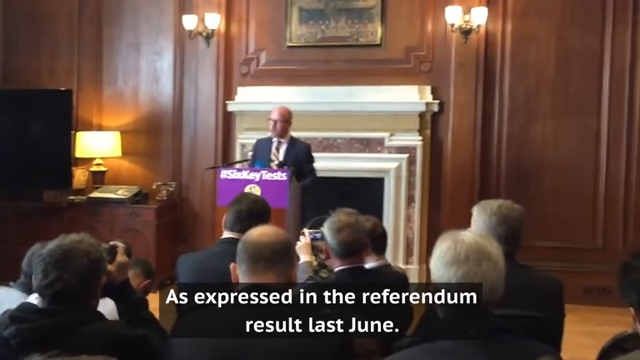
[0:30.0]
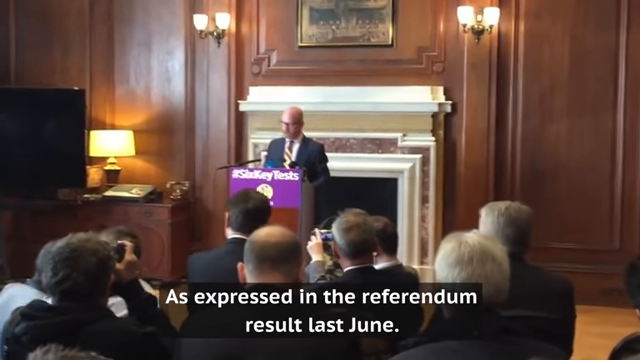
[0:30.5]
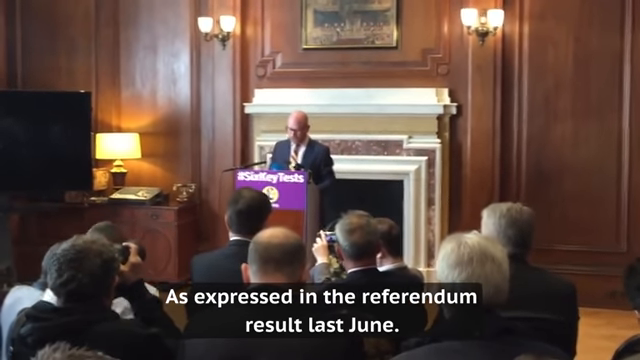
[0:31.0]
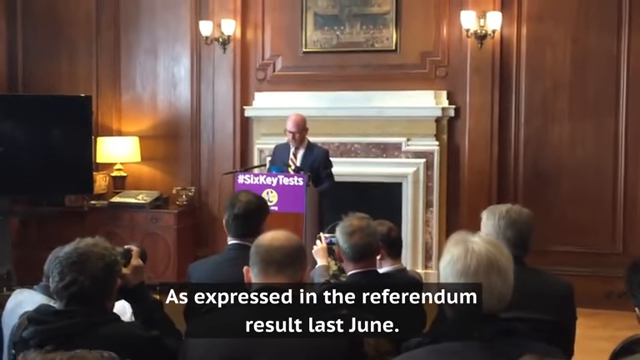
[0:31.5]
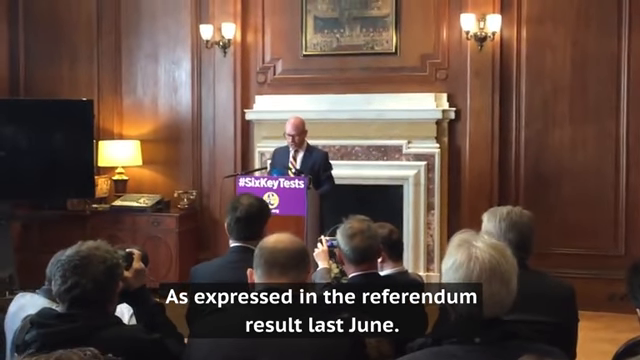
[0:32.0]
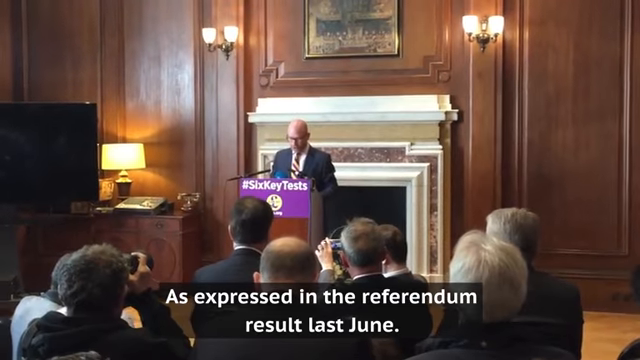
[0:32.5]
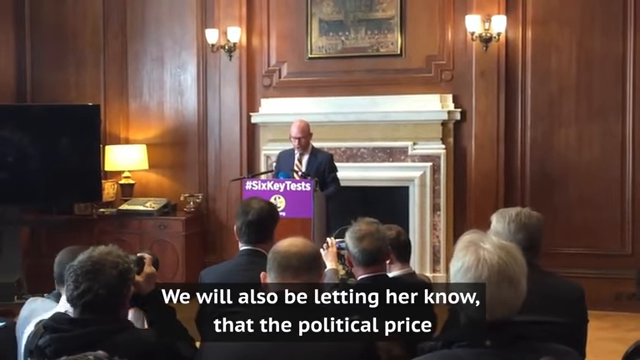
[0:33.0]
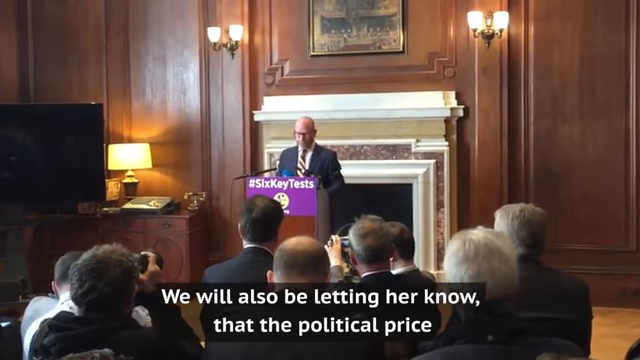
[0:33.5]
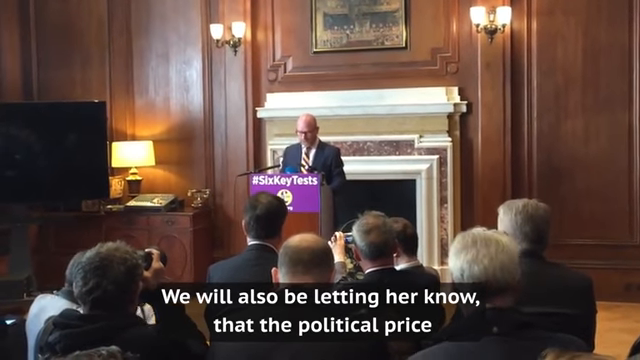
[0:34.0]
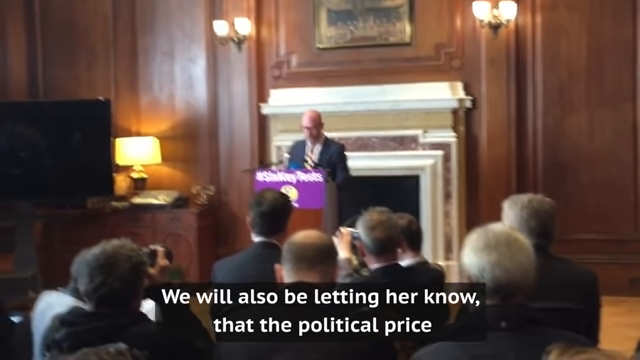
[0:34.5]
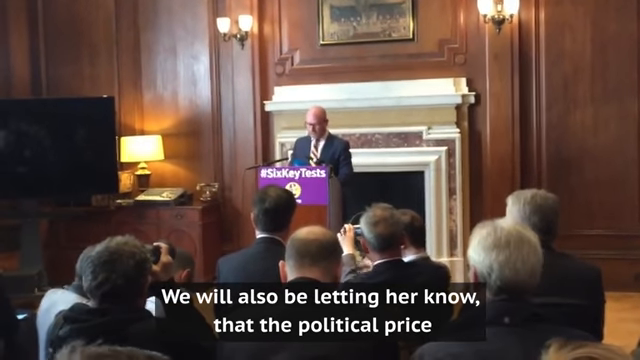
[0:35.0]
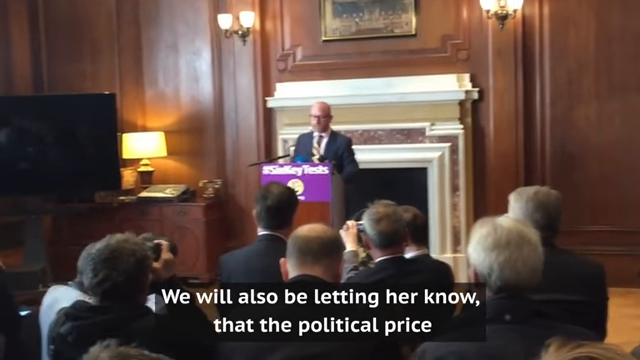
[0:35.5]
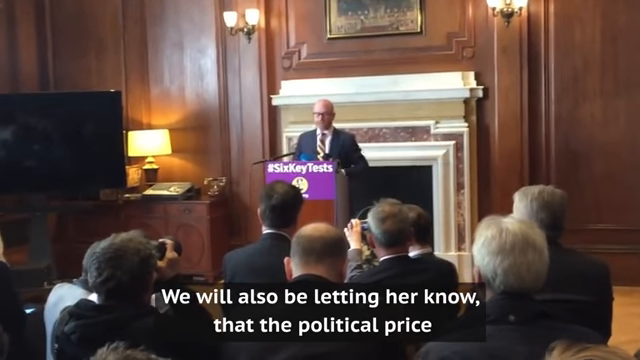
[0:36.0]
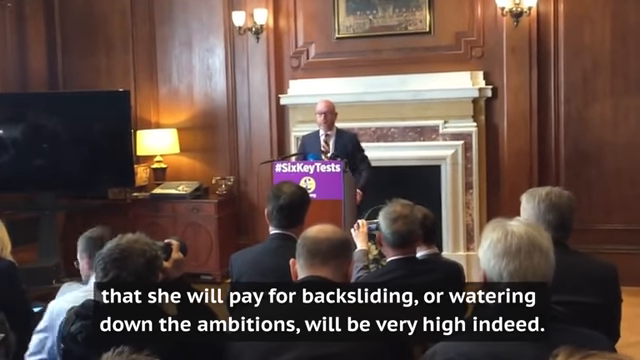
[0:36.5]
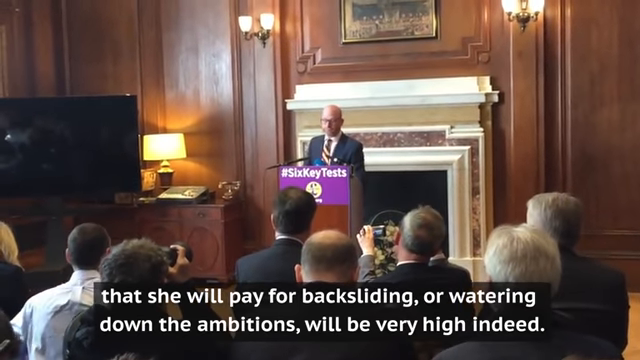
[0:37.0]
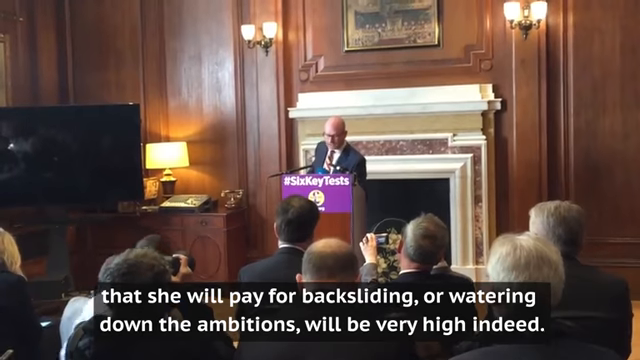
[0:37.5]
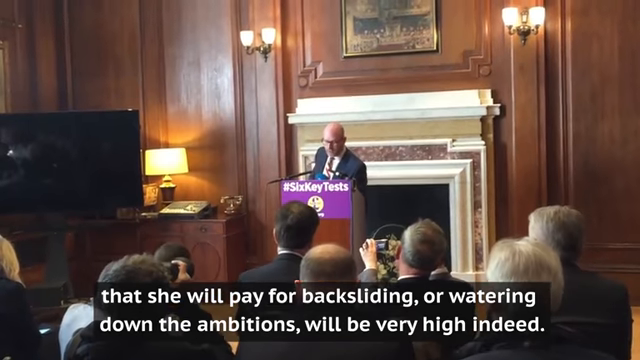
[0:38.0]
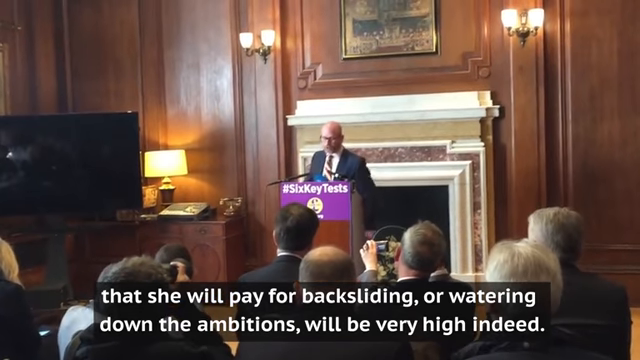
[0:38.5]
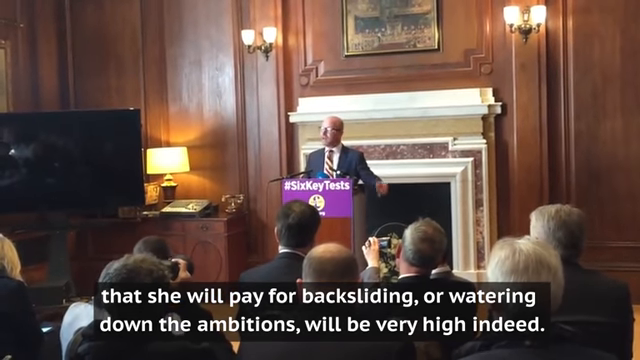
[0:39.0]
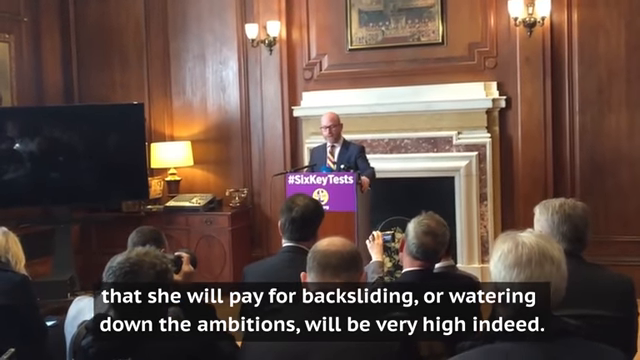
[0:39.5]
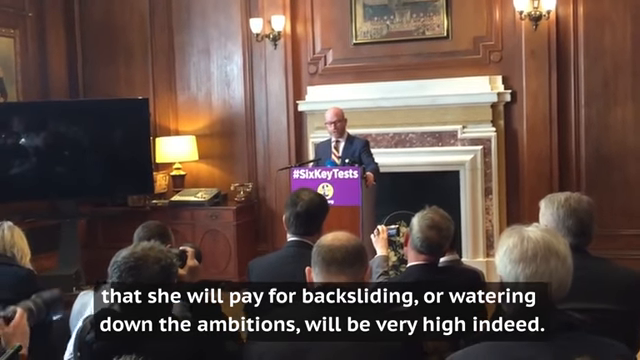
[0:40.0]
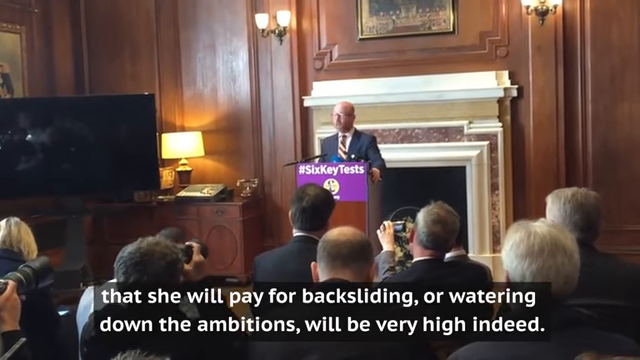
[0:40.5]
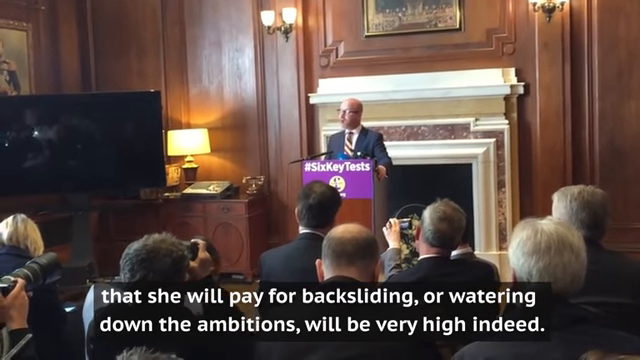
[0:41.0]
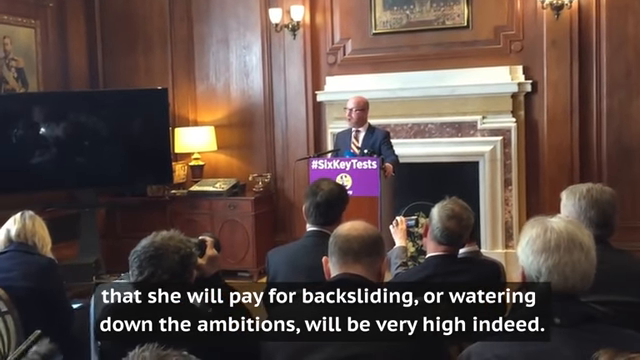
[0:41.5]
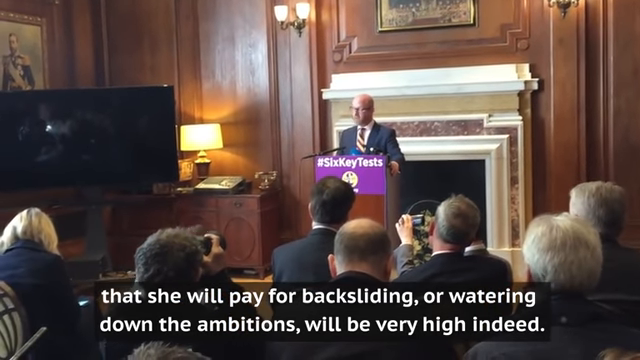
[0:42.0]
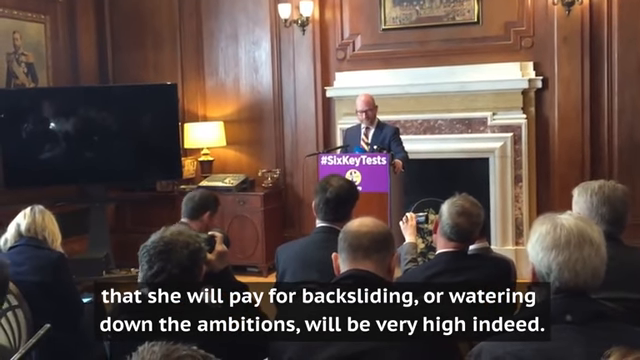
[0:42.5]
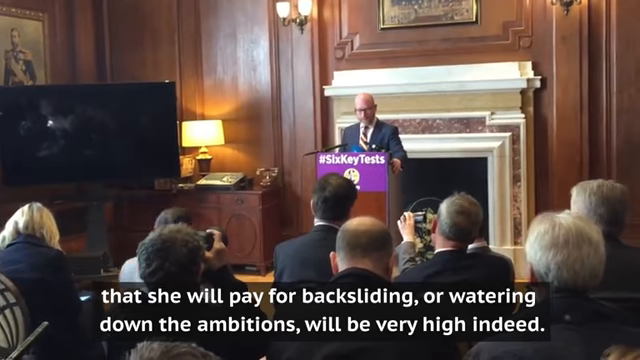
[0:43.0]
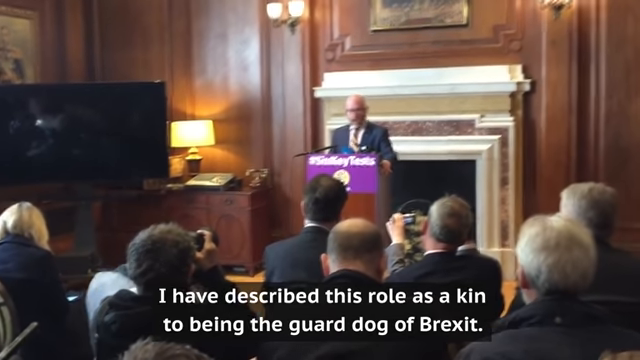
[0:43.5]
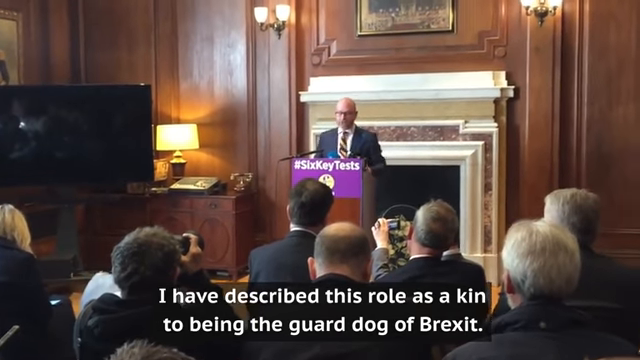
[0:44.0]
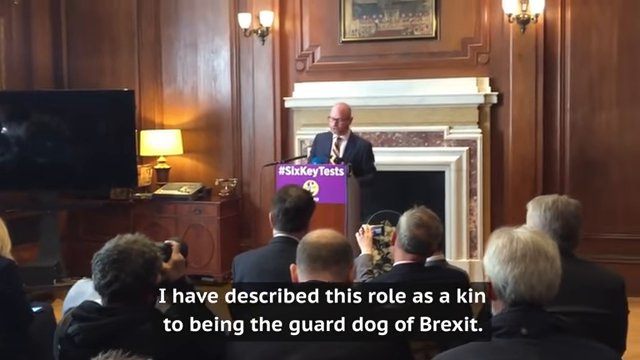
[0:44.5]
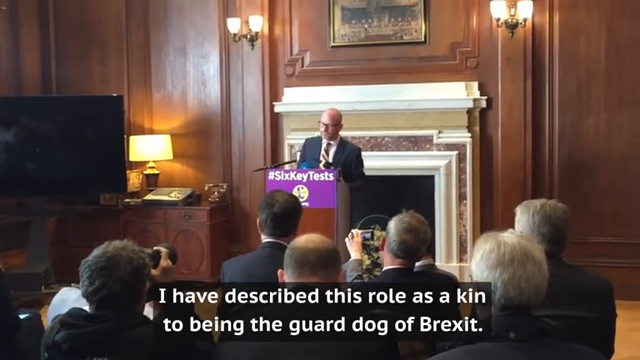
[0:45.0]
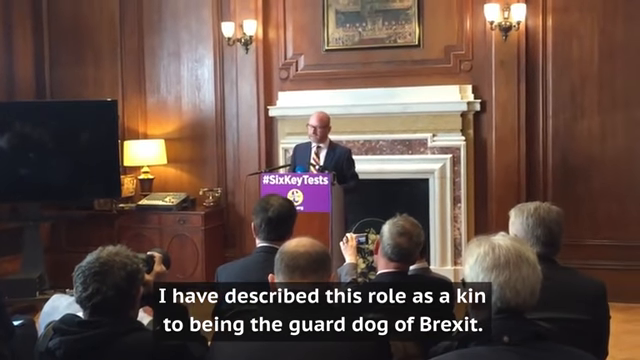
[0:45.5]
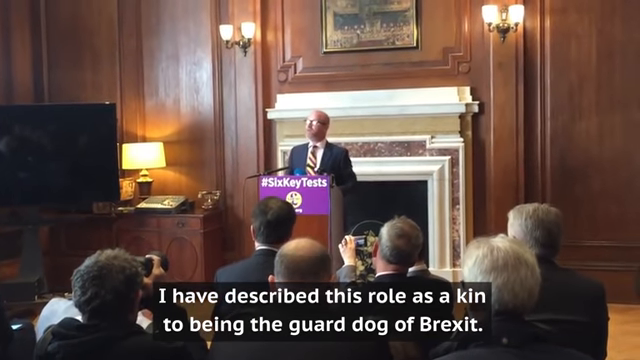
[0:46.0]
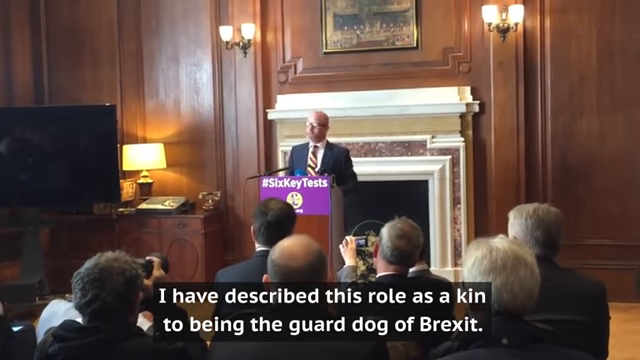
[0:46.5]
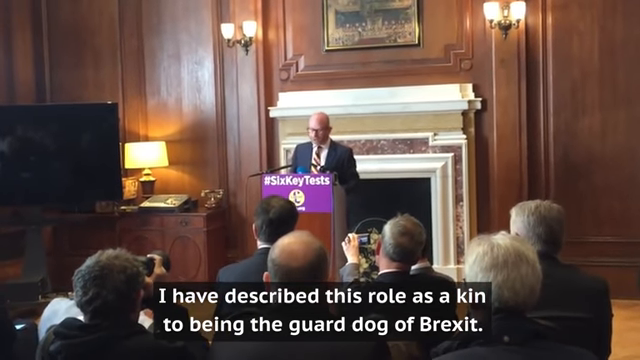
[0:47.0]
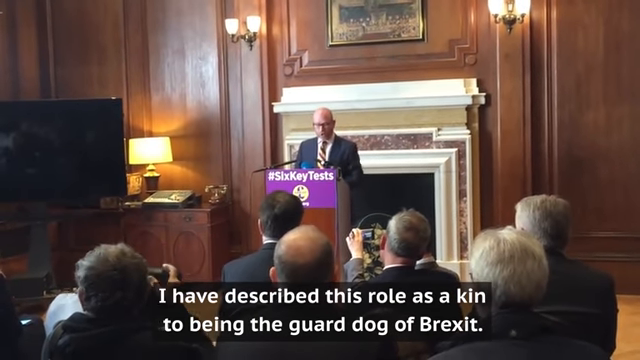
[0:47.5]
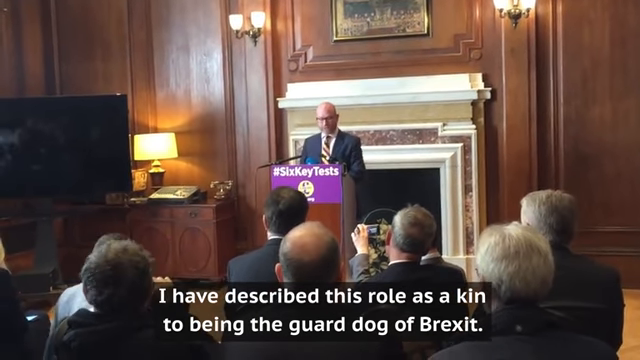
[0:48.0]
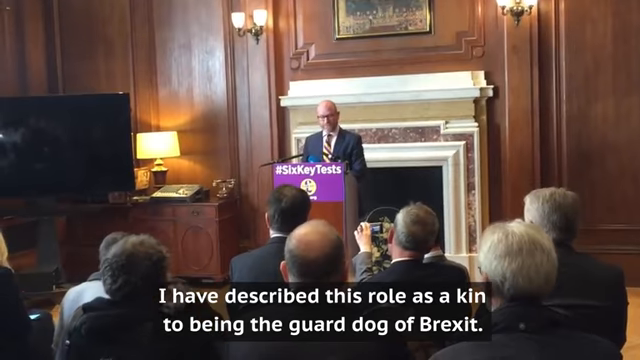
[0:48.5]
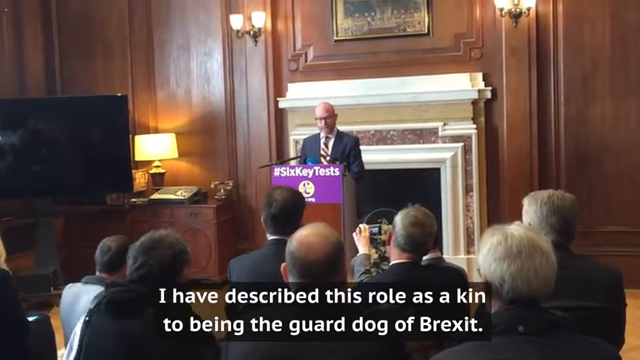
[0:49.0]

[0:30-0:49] A tall man wearing a black shirt stands at a podium, facing the audience and the camera, giving a speech. Behind the podium, a milk-white fireplace is on a wooden-paneled wall, with a framed painting hanging above it and two lamps attached on both sides. The audience, possibly members of the press, sit in front of the podium with their backs to the camera, holding mobile phones and cameras to record the speech. The top of the podium reads "#sixkeytests" in white on a violet background. There is a night lamp, possibly a table lamp, to the left of the podium, and a TV screen is partially visible on the left of the screen. A caption-like scroll with white text in two lines on a transparent black background is at the center bottom. The camera moves slightly, and the man moves his hands and head as he speaks.